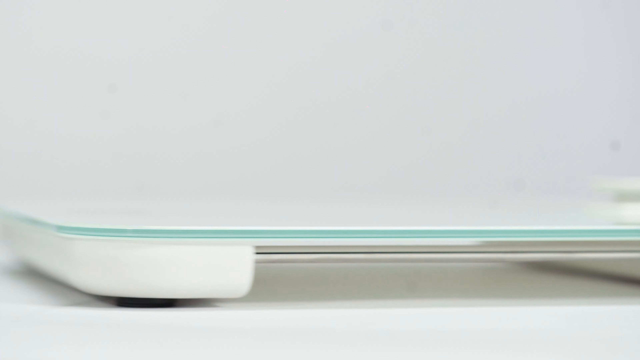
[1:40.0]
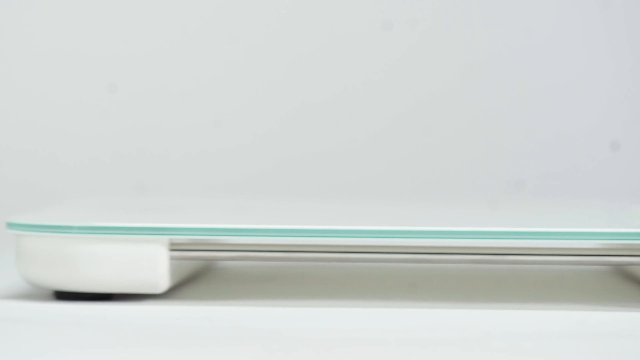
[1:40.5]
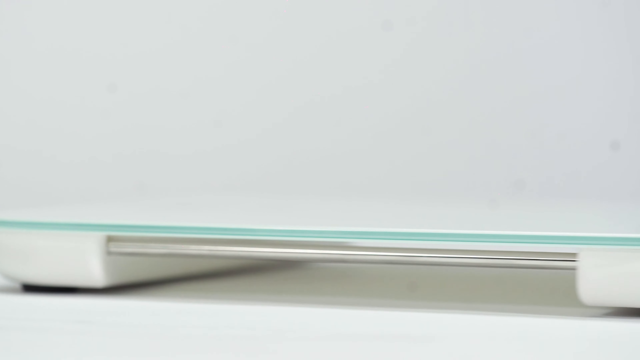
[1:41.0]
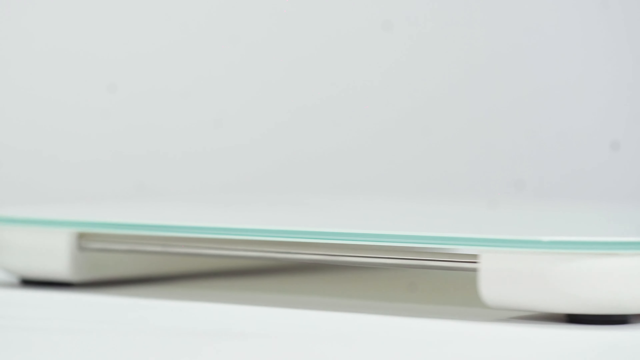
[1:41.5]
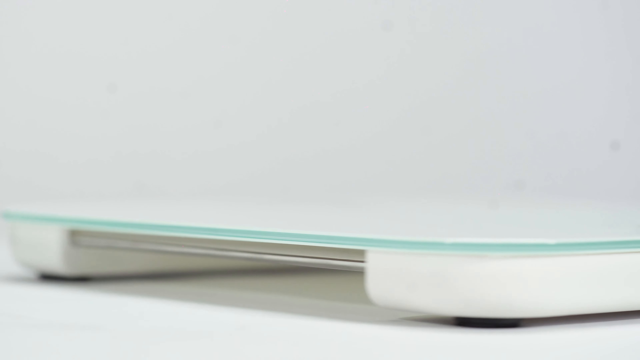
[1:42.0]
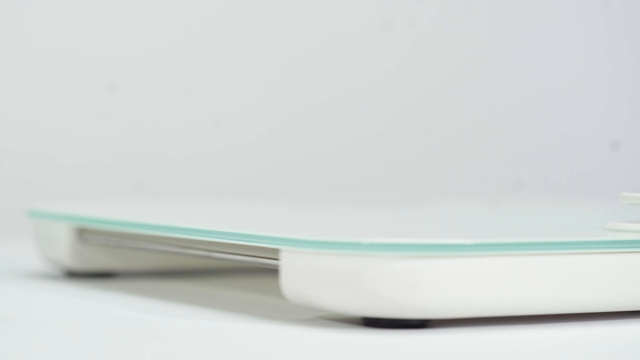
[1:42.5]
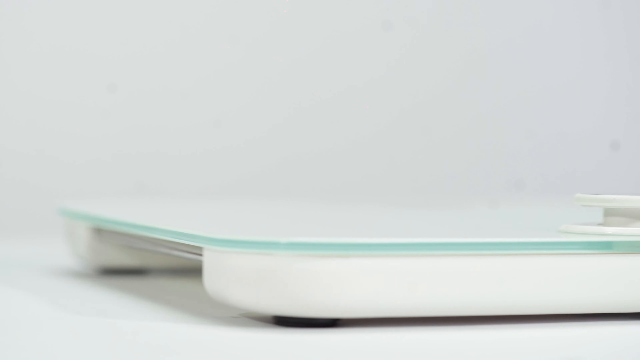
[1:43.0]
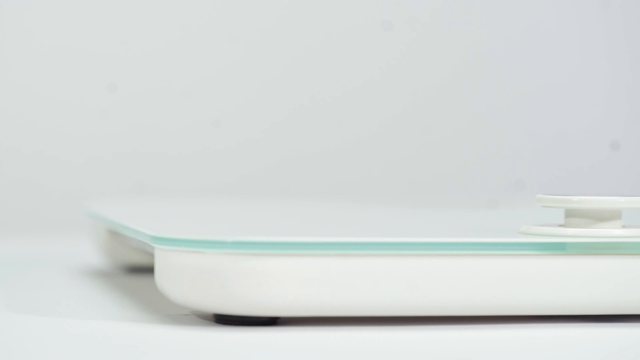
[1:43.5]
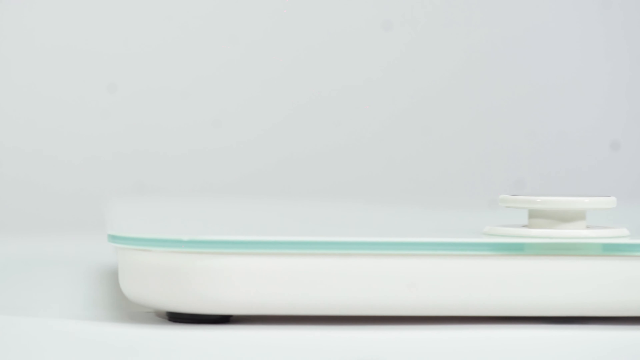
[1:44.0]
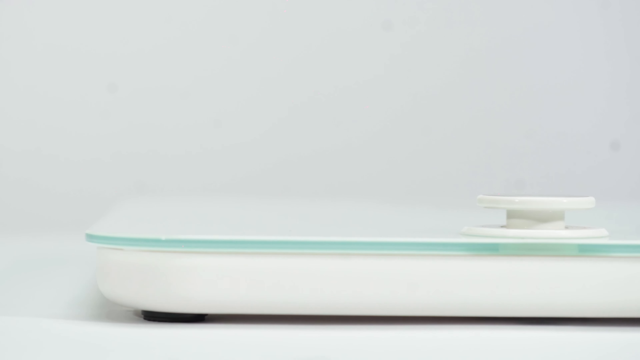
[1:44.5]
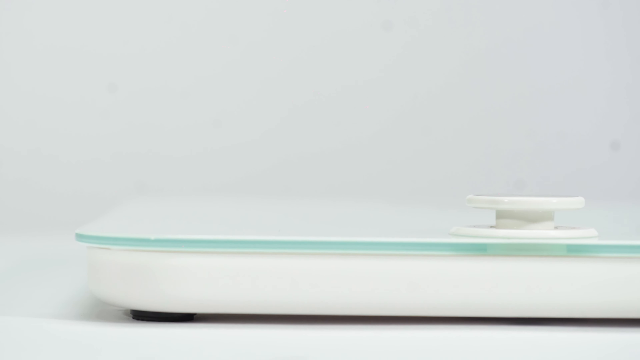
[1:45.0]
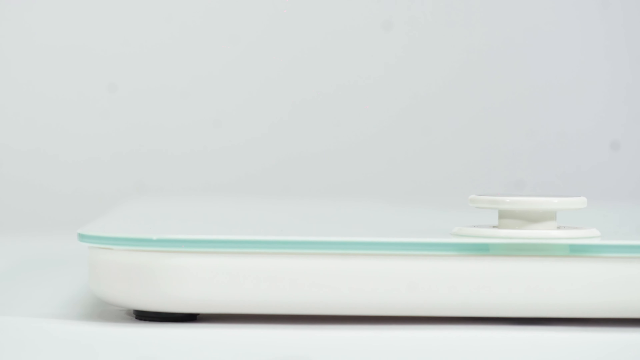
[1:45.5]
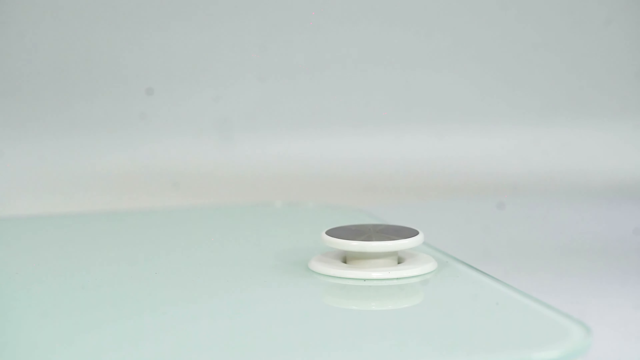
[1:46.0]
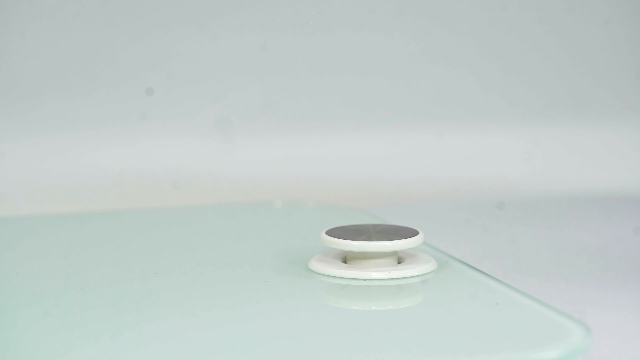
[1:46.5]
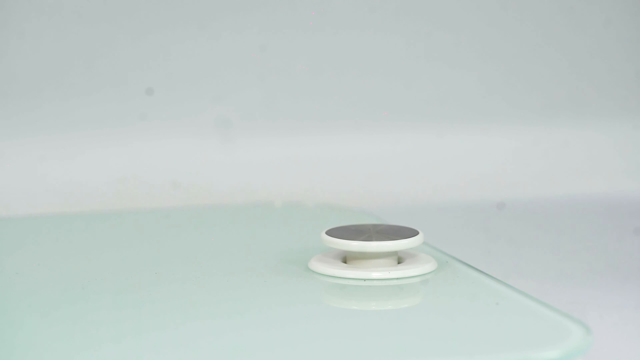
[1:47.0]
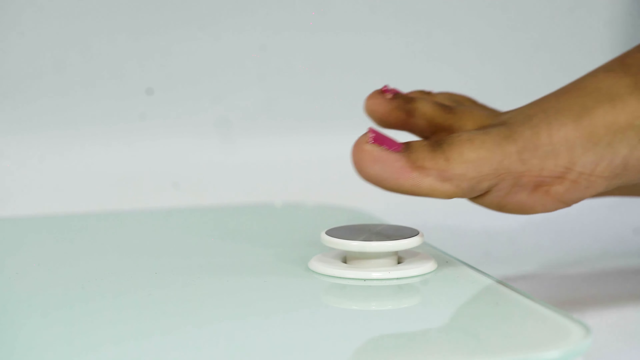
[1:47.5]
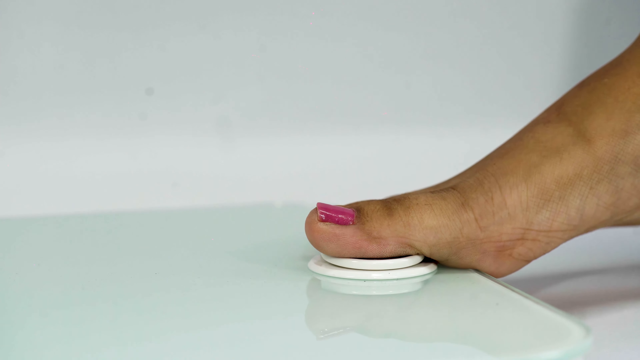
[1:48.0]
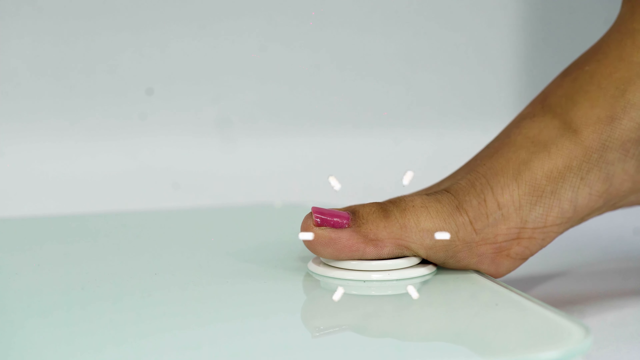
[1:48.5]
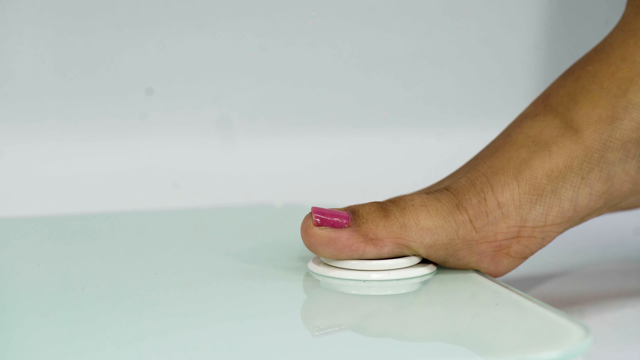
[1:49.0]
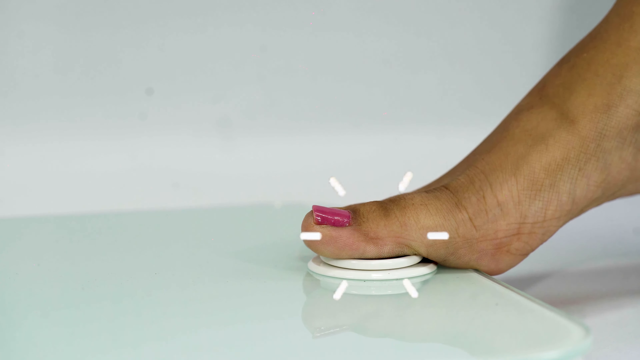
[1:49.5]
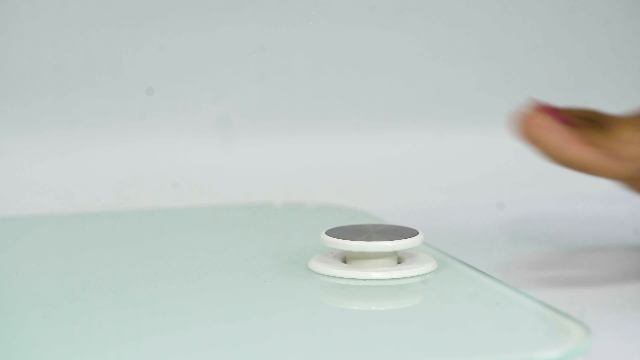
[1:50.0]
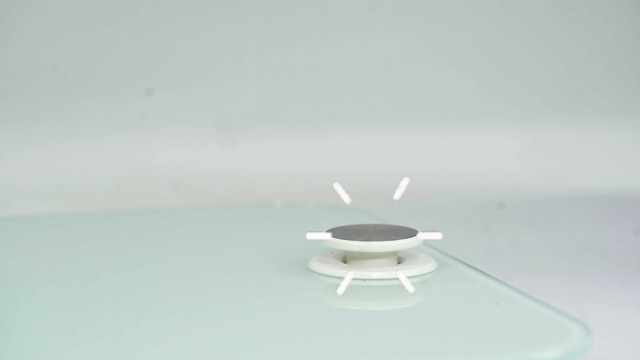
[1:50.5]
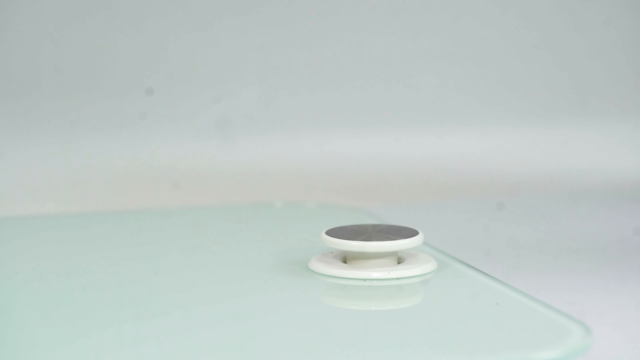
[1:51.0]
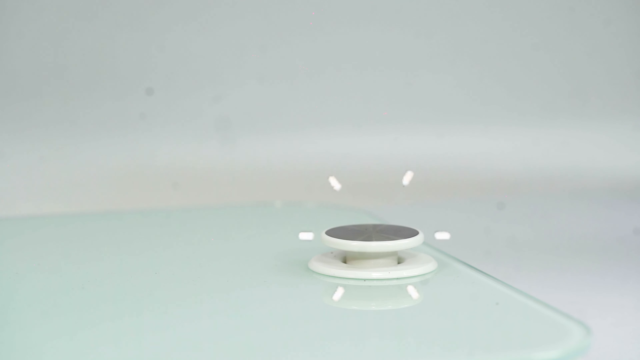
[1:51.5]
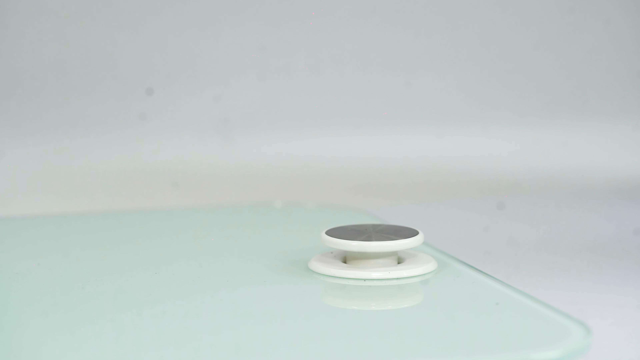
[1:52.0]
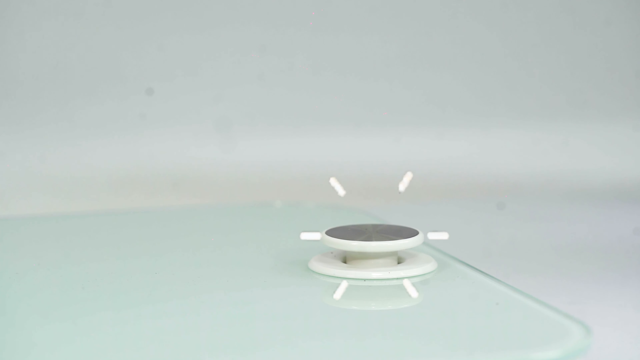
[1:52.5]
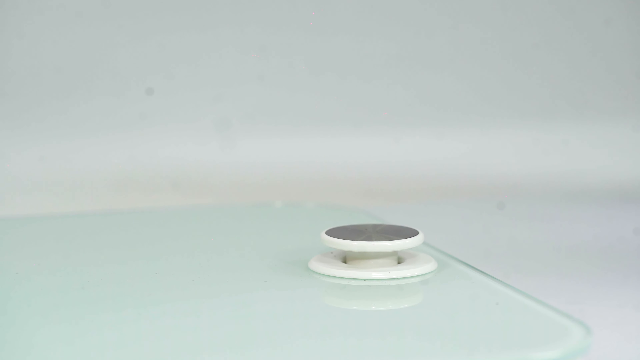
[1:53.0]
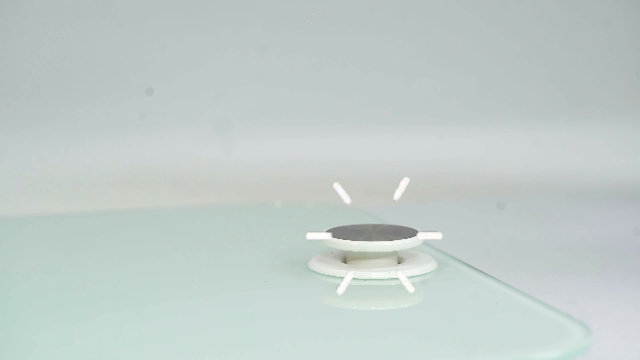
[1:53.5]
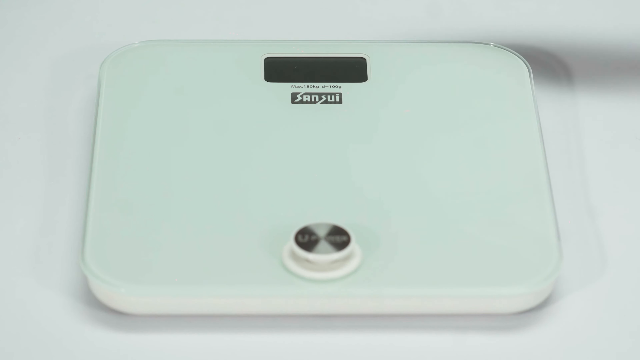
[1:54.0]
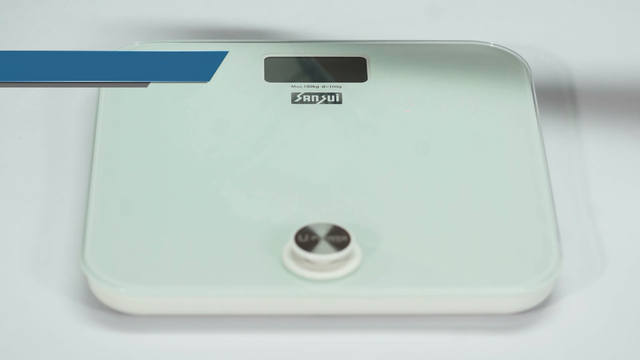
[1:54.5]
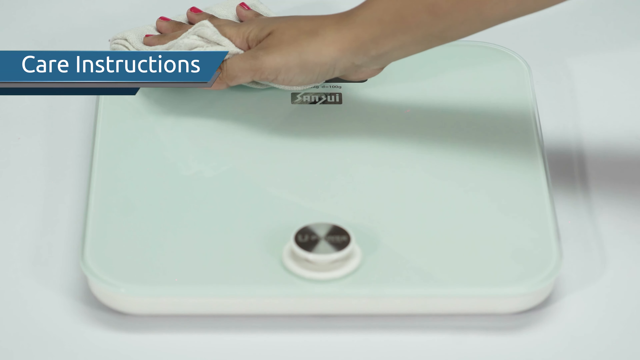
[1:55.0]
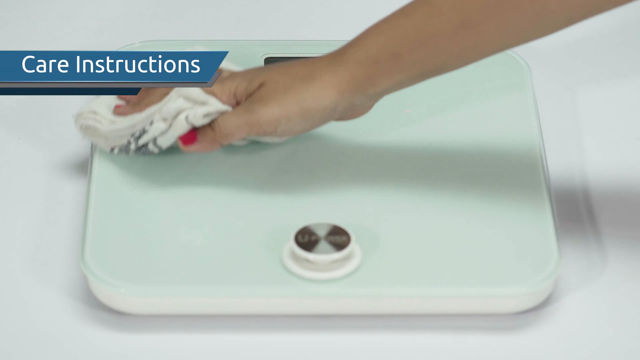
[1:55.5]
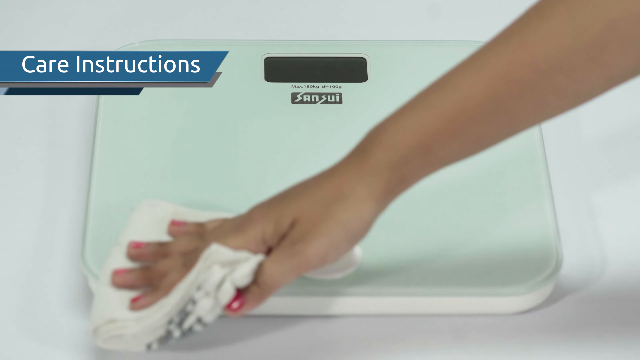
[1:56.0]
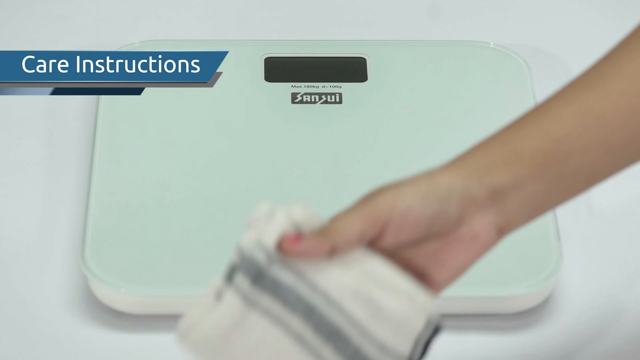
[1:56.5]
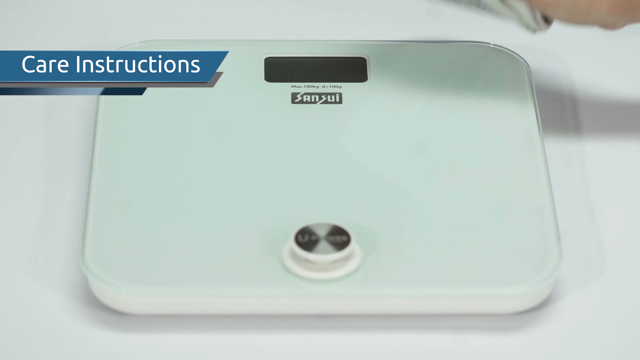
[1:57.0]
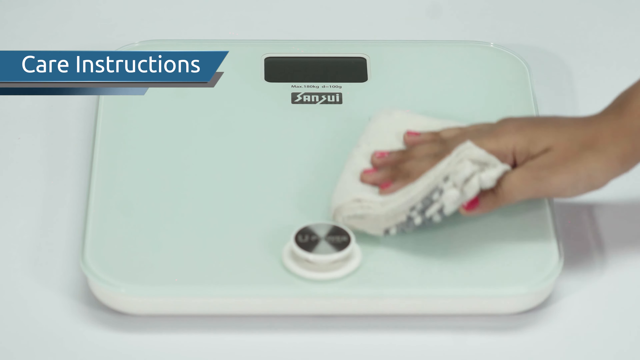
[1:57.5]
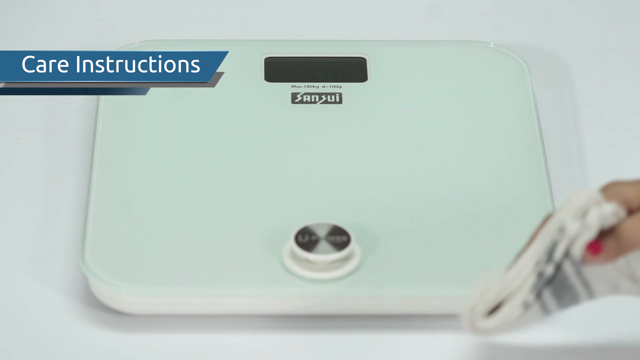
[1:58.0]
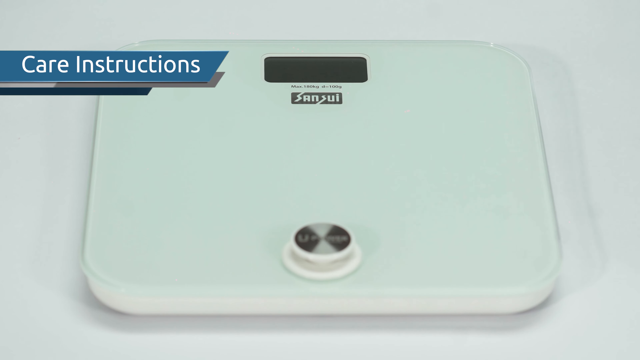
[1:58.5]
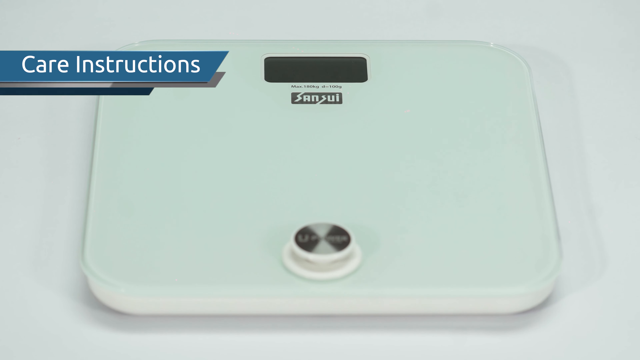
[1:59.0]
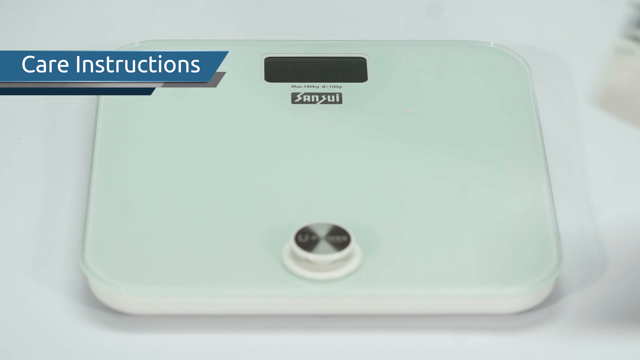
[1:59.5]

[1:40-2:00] A very close-up image shows white scales, and a woman's right toe activates a button at the bottom of the scales. The words "CARE INSTRUCTIONS" are written in the top left corner in white on a blue background, seemingly showing how to look after the scales. A close-up shows the button with the woman using her right foot, predominantly her big toe, to activate the scales. A woman's hand then uses a rag to wipe the scales down. The video pans around the scales very close up. The words "care instructions" appear in the top right, along with the woman wiping the scales down with the rag to clean them. This goes around in a loop, showing the same thing over and over.